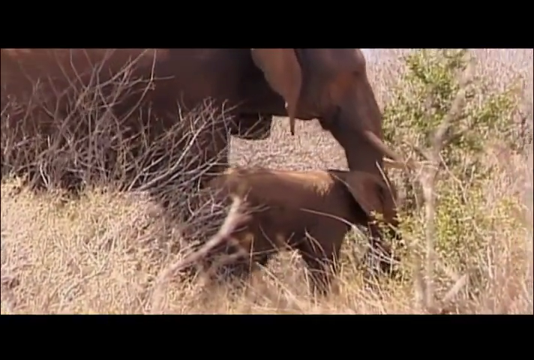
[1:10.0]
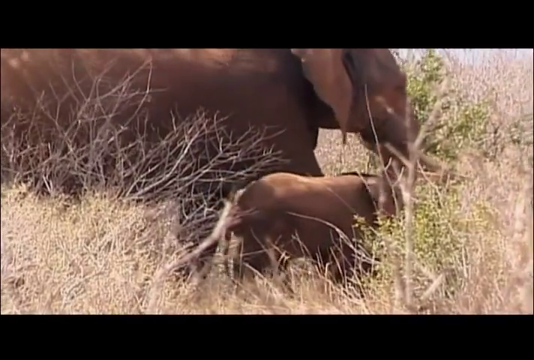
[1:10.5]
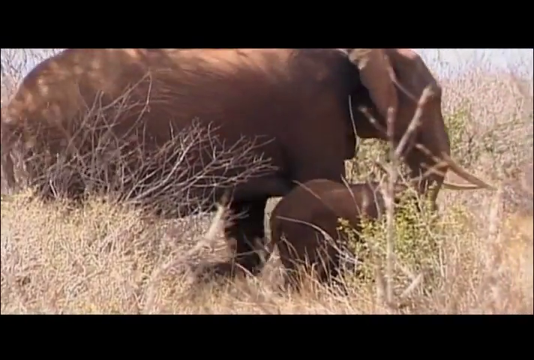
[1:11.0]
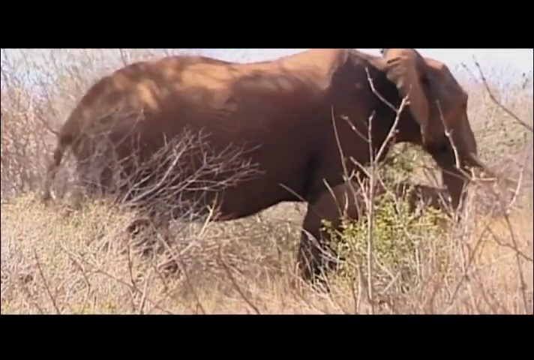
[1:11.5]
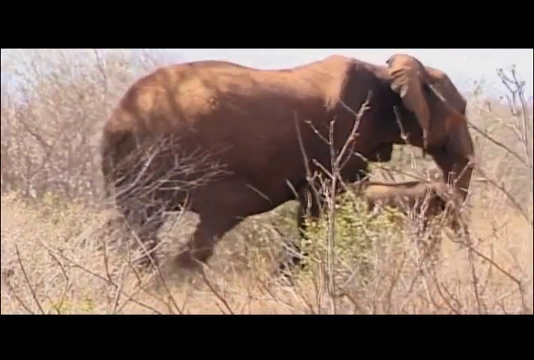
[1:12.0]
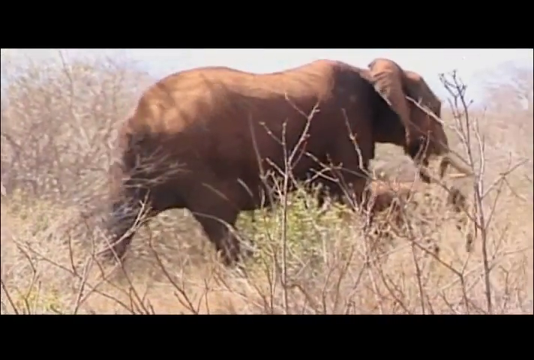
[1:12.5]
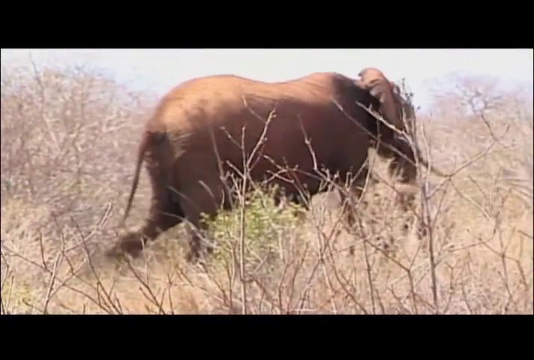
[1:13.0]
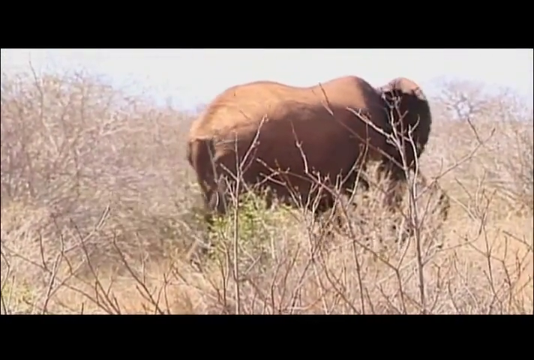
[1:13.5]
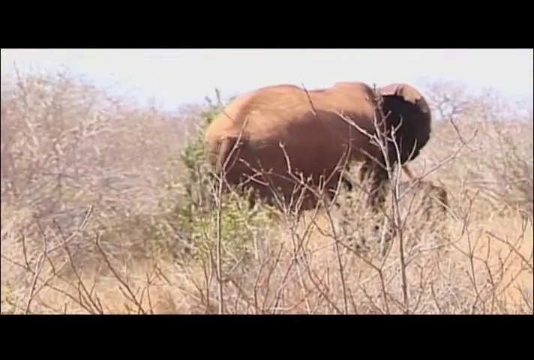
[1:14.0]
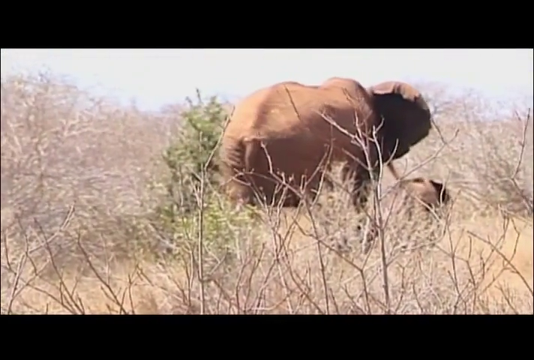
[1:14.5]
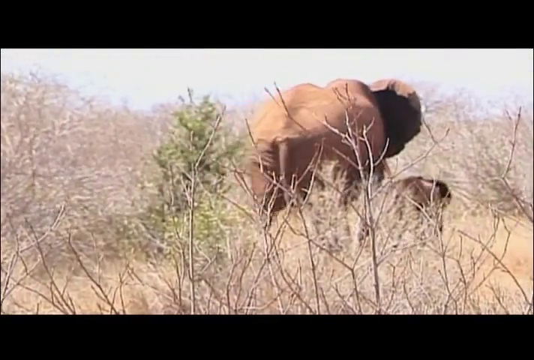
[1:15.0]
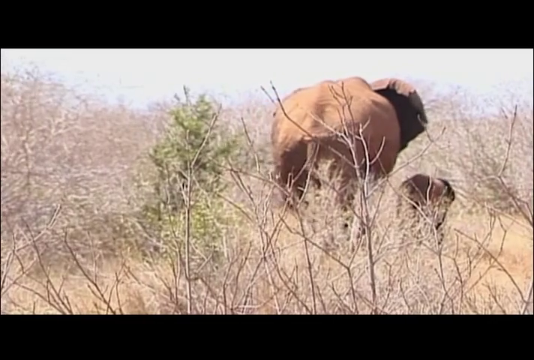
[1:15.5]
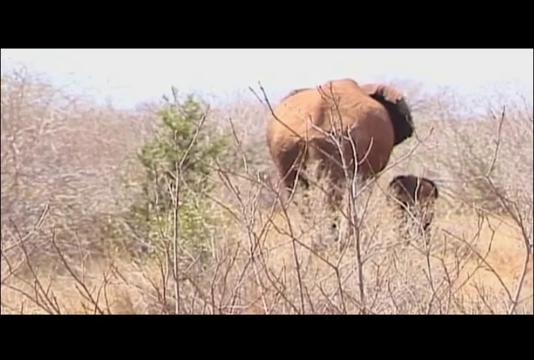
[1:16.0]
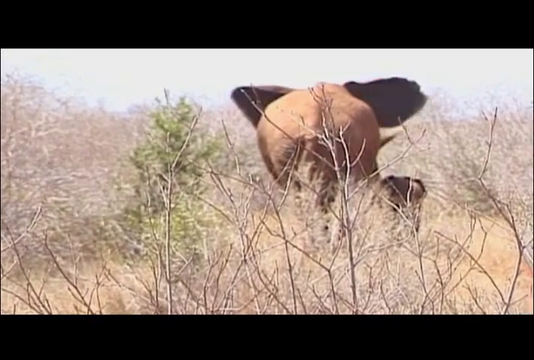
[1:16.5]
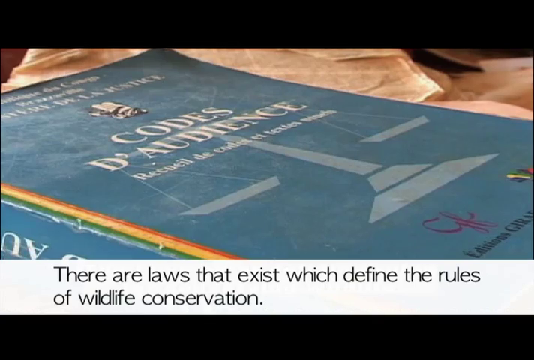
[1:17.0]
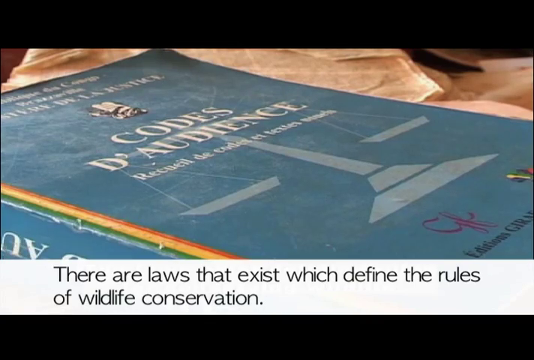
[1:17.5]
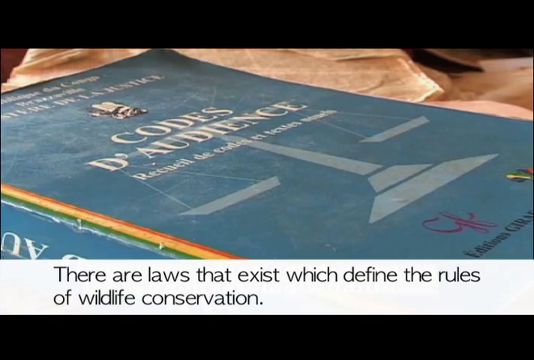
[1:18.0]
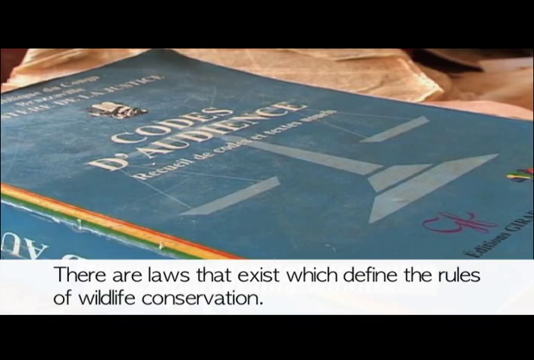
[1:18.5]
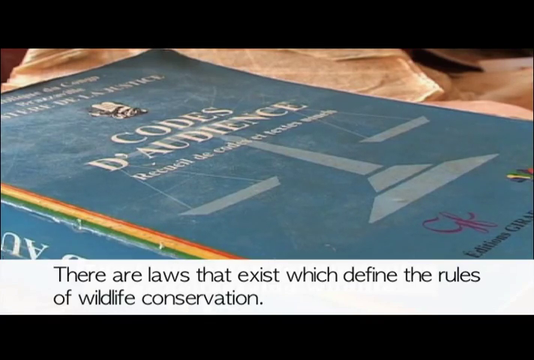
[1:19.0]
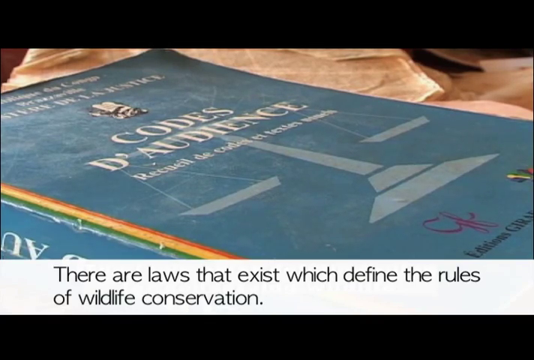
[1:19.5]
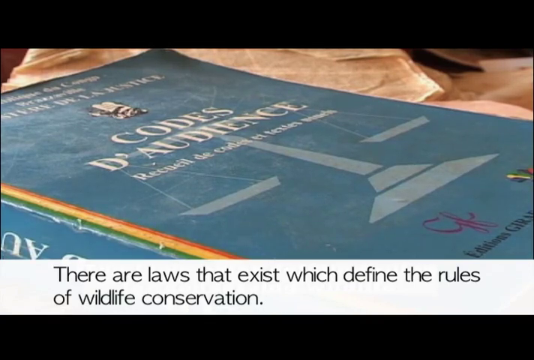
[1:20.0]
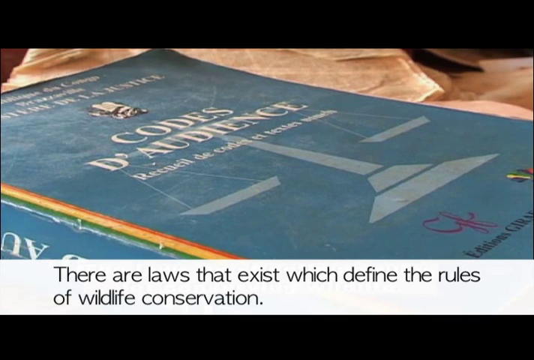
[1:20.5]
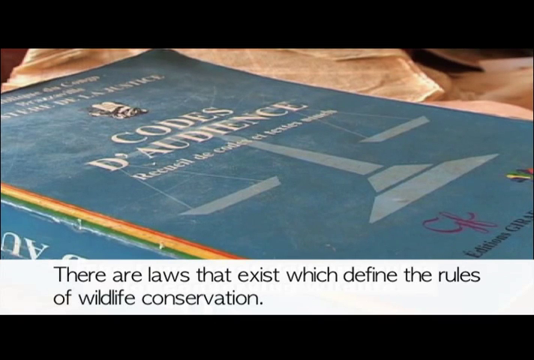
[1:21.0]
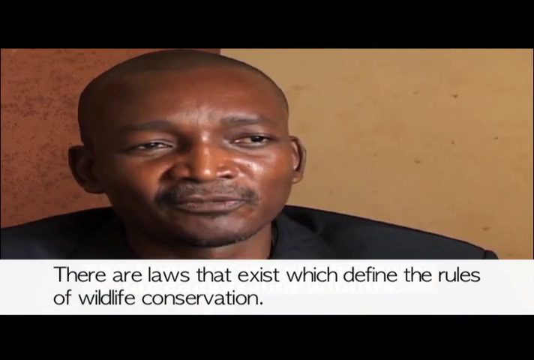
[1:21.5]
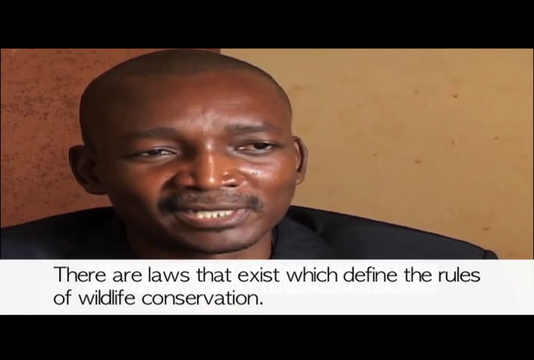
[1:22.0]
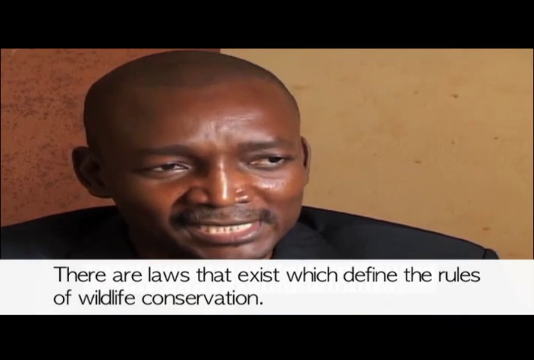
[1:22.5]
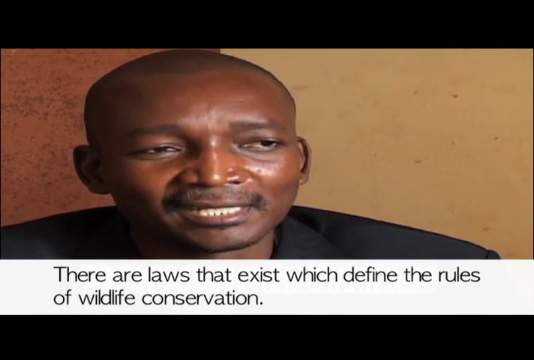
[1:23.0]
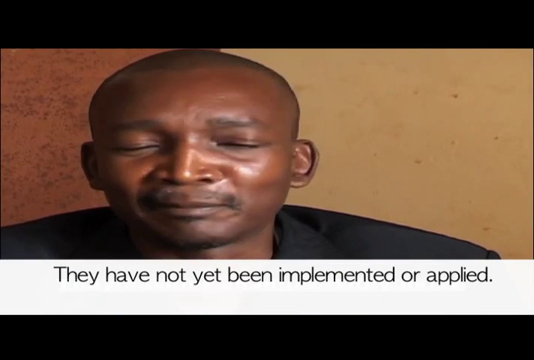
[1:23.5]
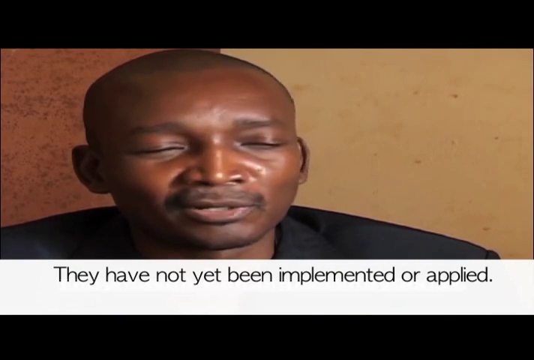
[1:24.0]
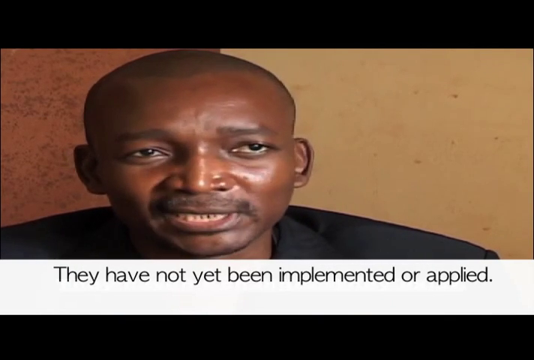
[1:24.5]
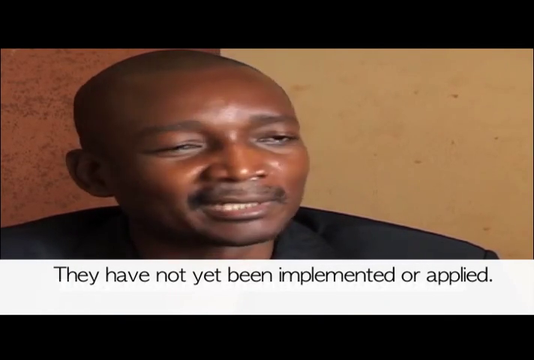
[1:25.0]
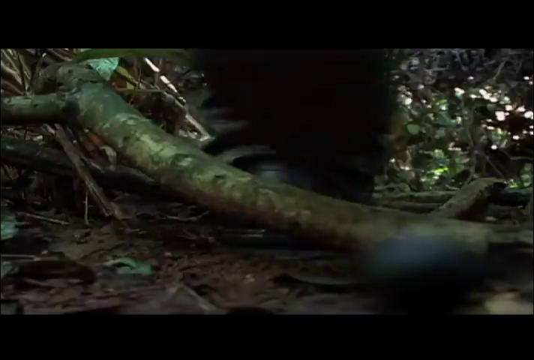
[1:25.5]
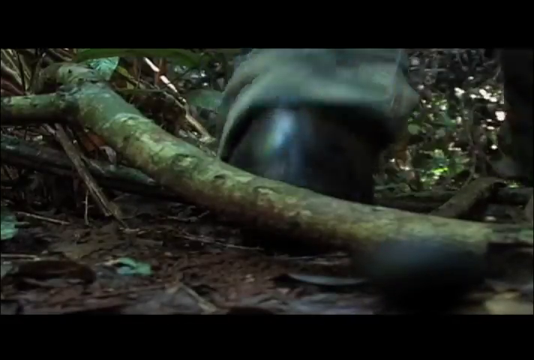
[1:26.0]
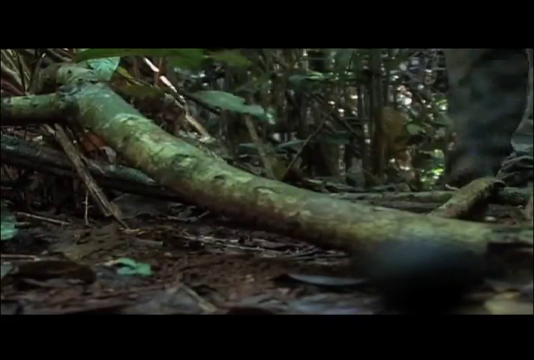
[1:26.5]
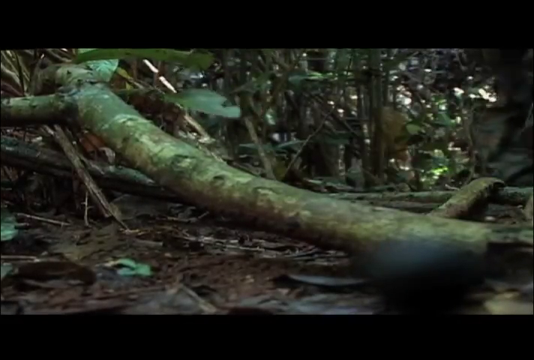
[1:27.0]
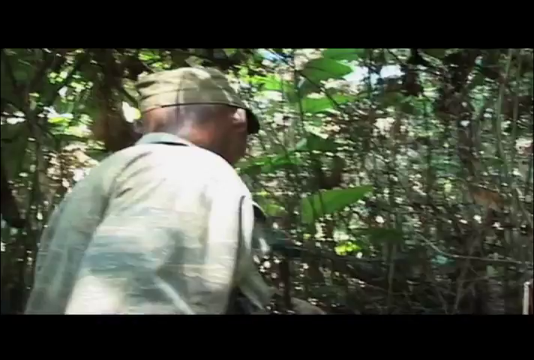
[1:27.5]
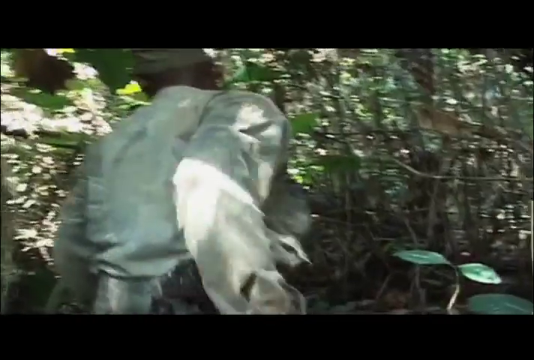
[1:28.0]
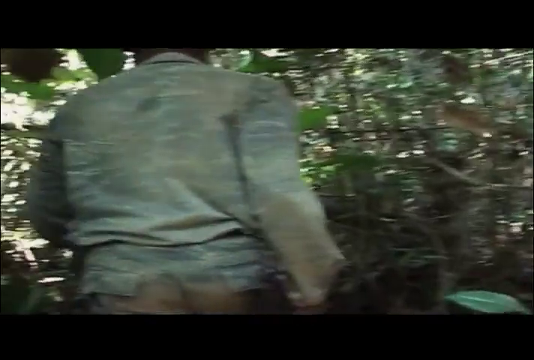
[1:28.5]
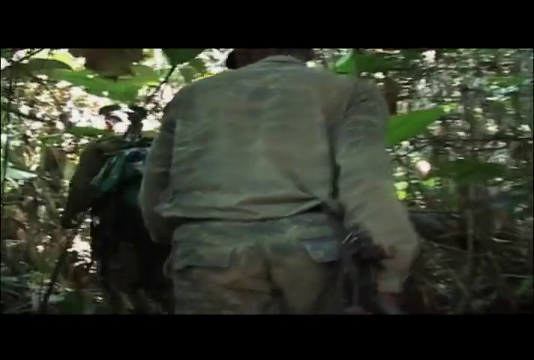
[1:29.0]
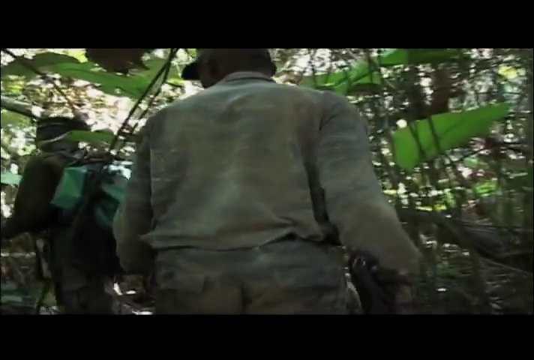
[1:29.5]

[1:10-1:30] The mother and baby elephant walk through the grass of a dry Sahara. There is one green tree; everything else is brown — tall grass, short grass and scrub grass, the kind of foliage found on an African savannah. The video changes to a blue book of codes, the rest of it in another language, with a bar of text at the bottom of the screen reading "There are laws that exist which define the rules of wildlife conservation." An African man then appears on screen, speaking, and the bar at the bottom reads "They have not yet been implemented or applied." A boot steps over a vine or a fallen limb on the forest floor, and the man continues to walk forward. Both men are black and wear camouflage-type clothing. The one in front appears to be leading the other, who is seen from behind and has a long rifle in his hand.